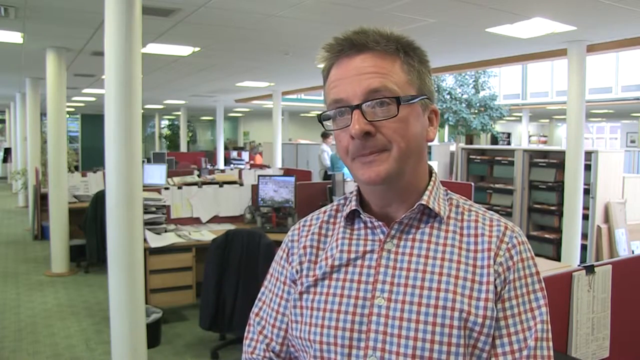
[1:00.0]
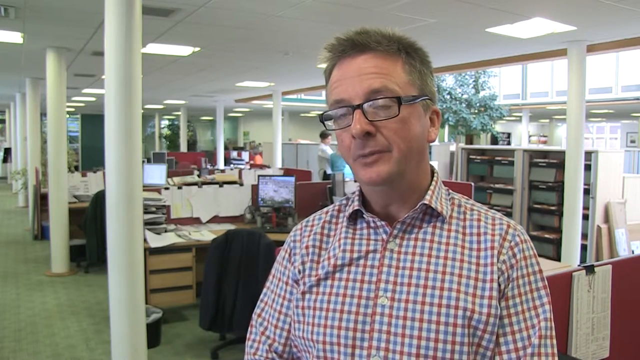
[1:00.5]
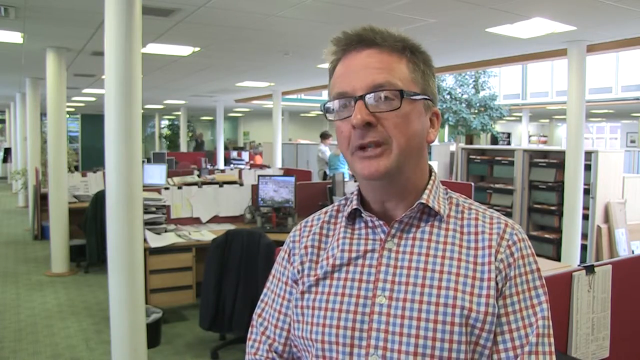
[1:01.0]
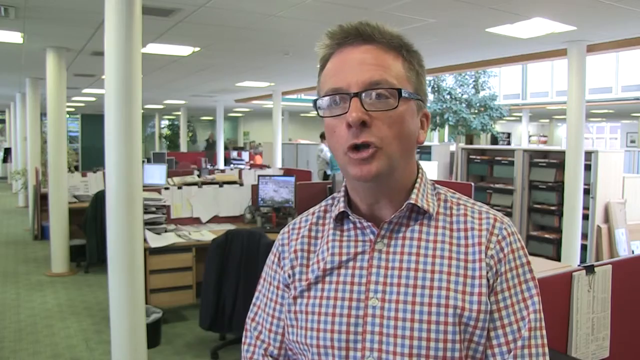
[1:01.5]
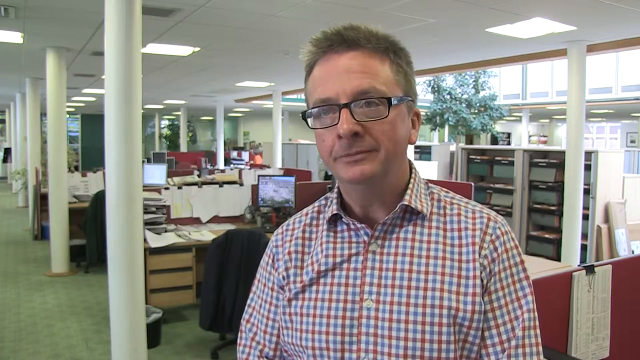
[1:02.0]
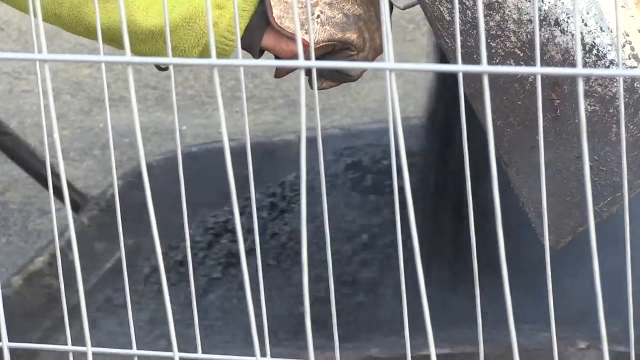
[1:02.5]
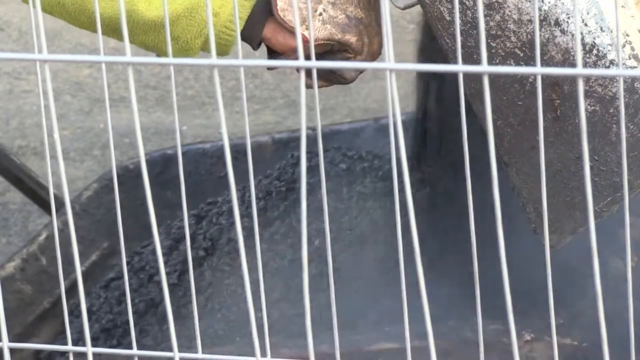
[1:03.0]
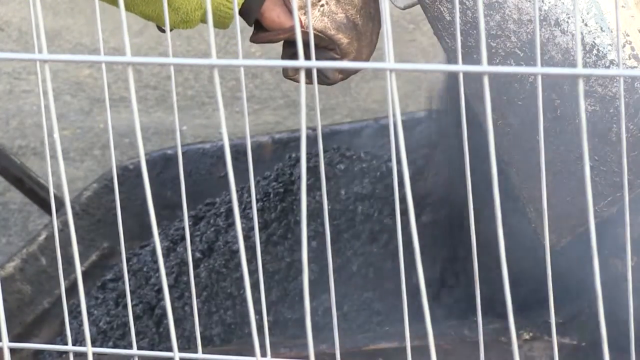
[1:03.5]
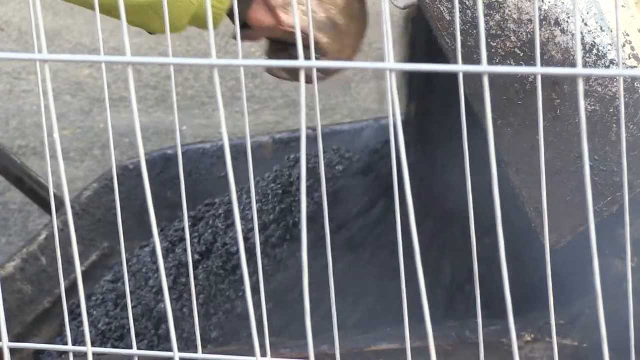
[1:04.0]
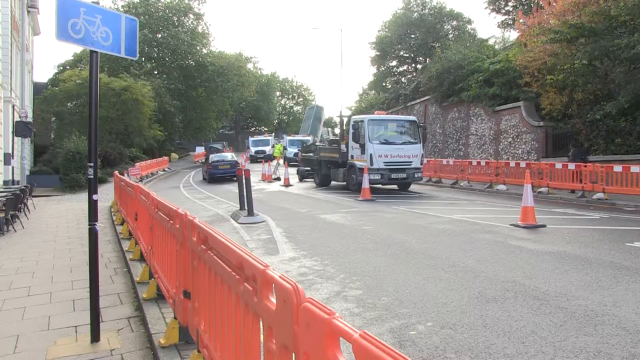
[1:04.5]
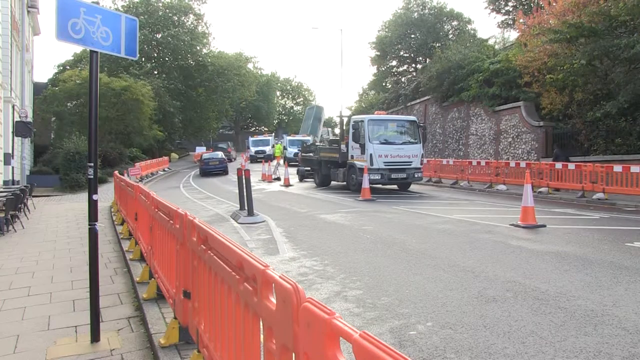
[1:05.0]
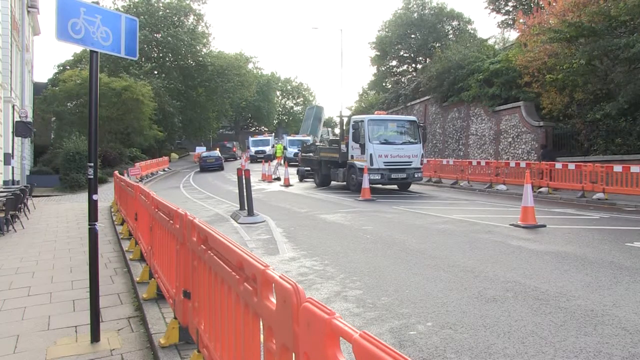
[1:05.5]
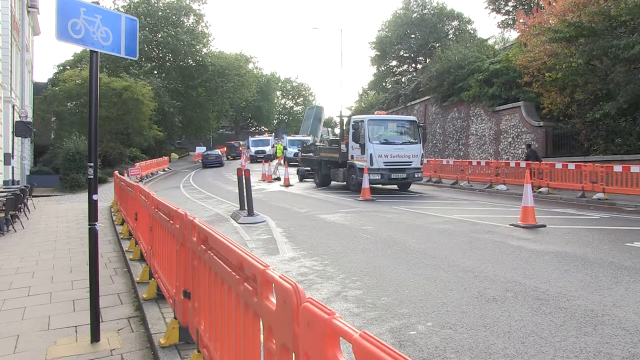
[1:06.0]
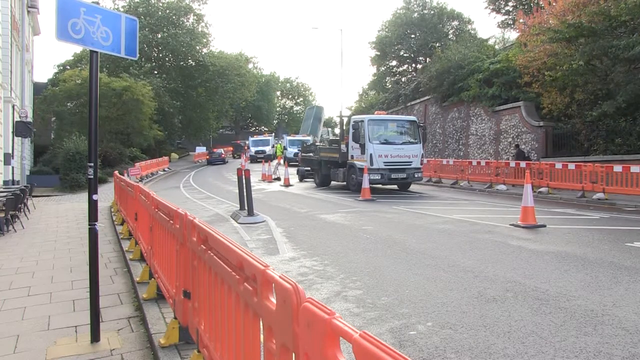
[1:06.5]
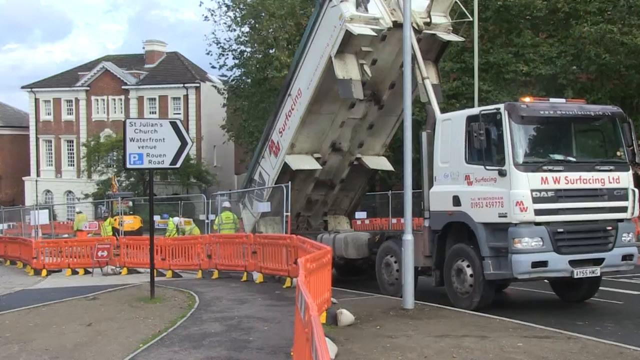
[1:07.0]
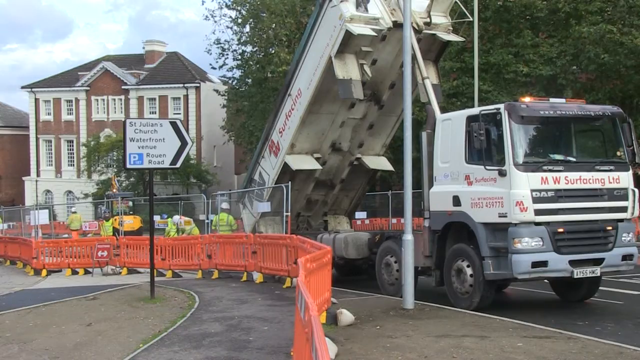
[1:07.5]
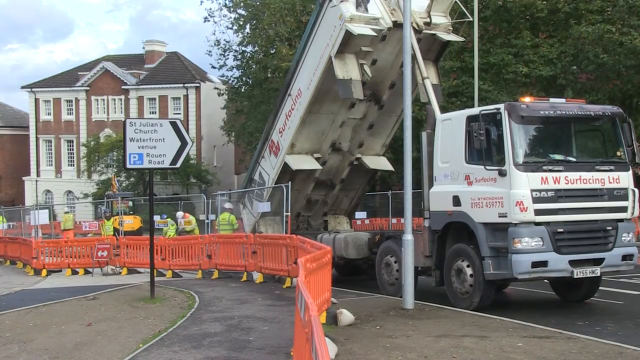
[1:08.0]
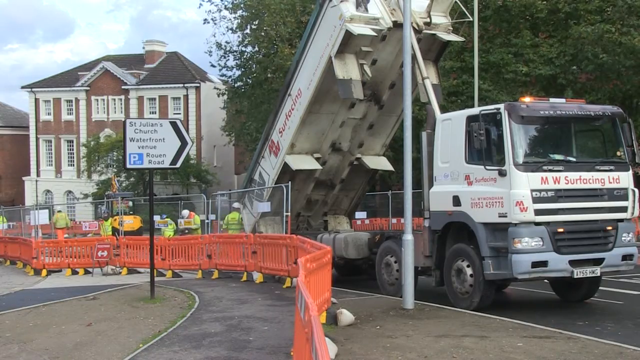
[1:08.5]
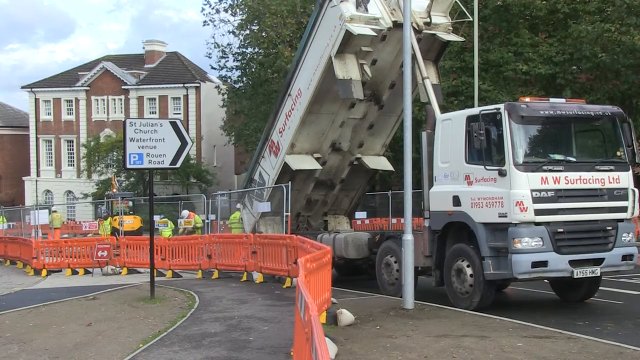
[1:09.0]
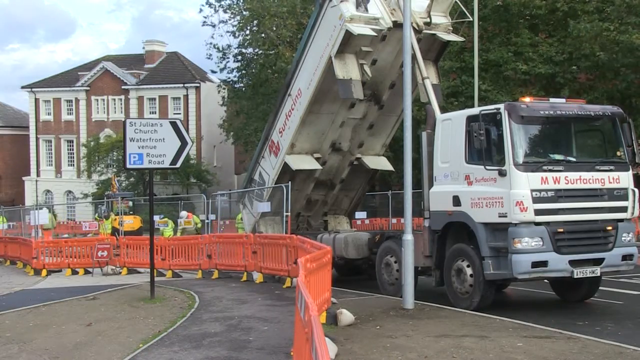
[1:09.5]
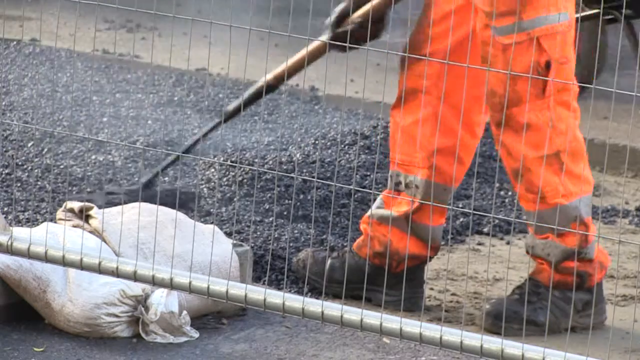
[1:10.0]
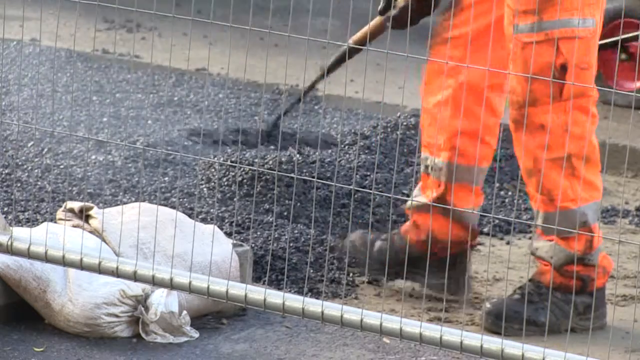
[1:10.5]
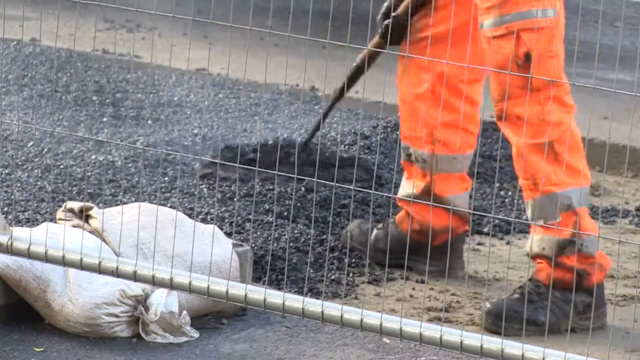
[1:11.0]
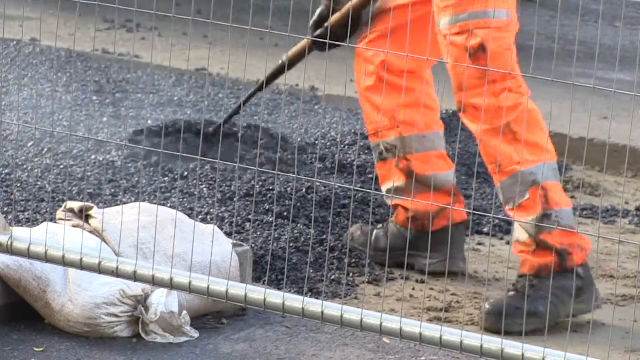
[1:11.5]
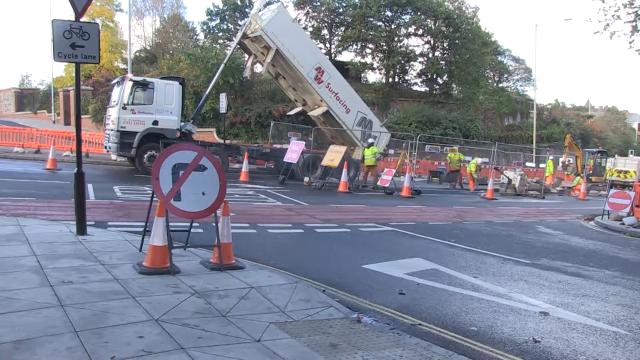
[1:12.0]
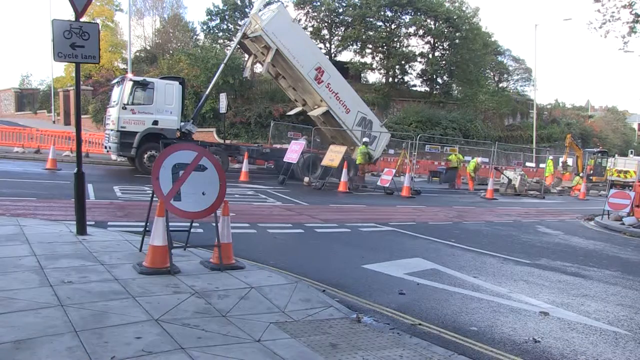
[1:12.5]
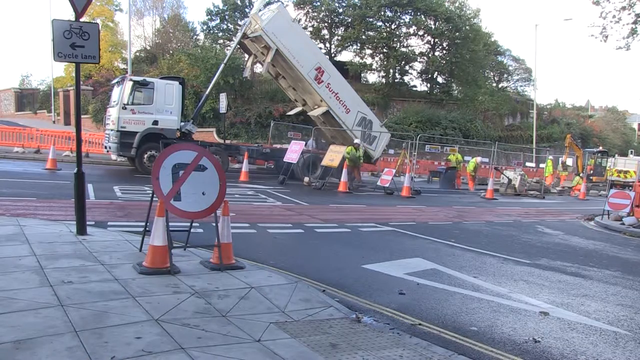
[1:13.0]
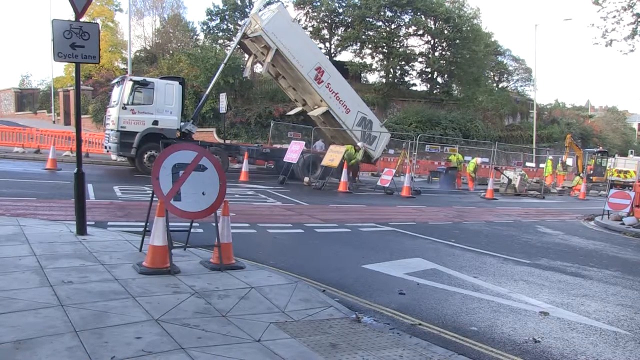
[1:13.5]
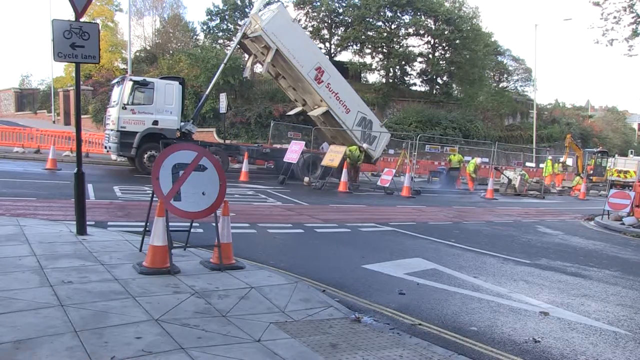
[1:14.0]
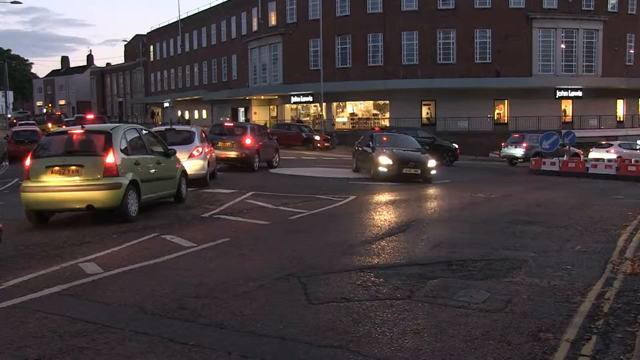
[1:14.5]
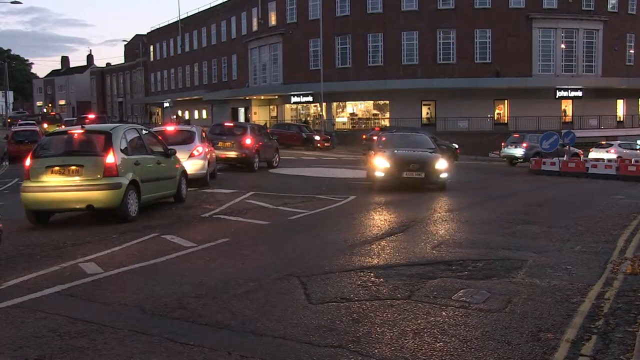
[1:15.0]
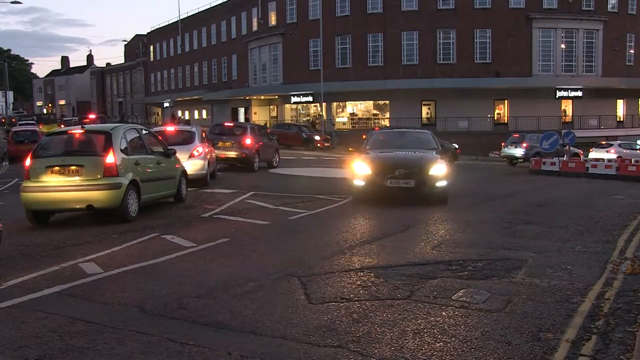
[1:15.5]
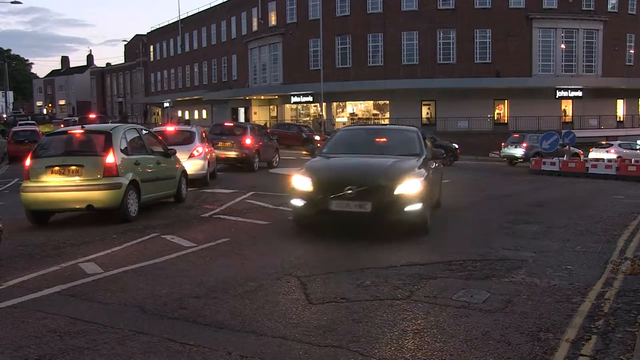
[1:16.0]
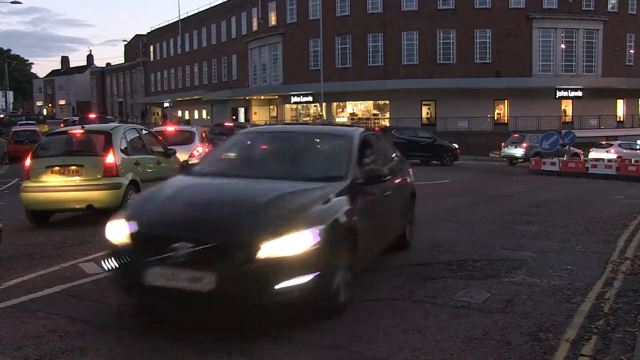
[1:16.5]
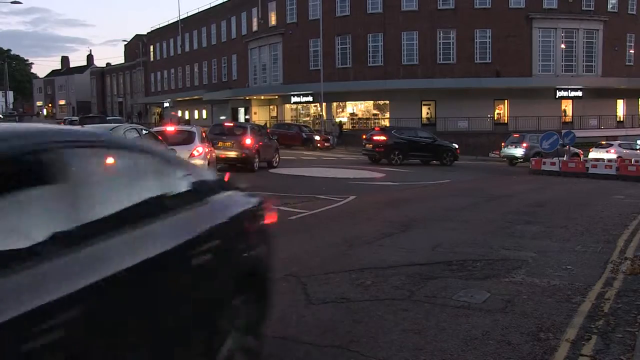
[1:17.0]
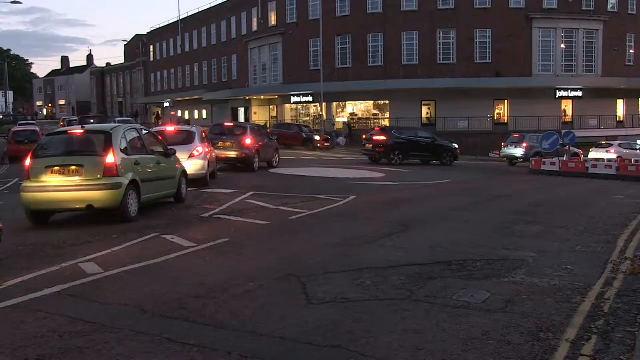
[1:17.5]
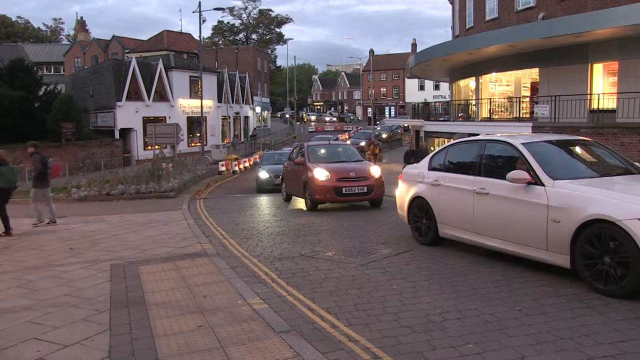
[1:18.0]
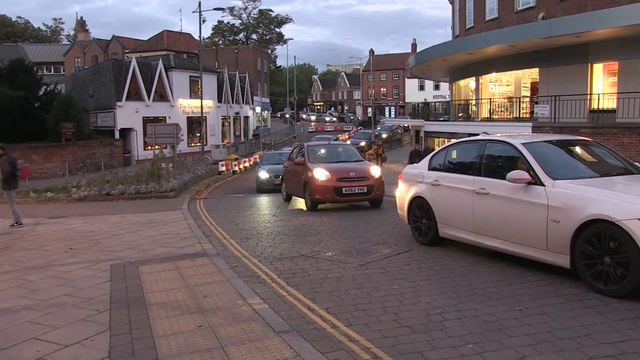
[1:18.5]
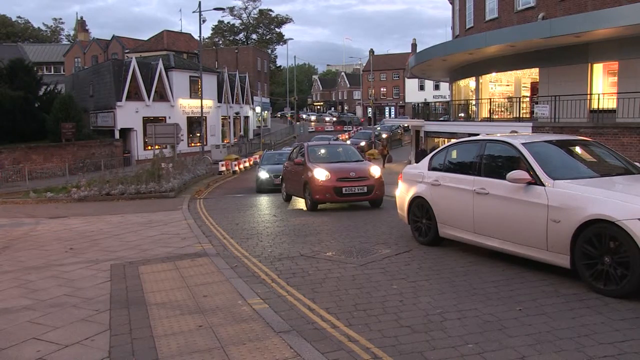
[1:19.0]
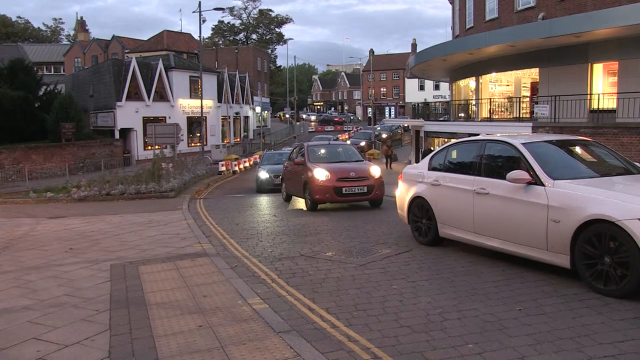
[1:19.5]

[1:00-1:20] Peter continues to be interviewed at the office. The scene changes to tarred road material being poured into a wheelbarrow. Workmen wearing safety equipment and clothing fix the tarred road, using big trucks parked alongside the road. The road is closed to traffic for the repairs. Cars try to navigate the route using a different pathway, and cars are shown in the early evening. As the cars move in a convoy, people walk alongside the road. The video cuts back to Peter at the office. The camera movements are steady through the different scenes.